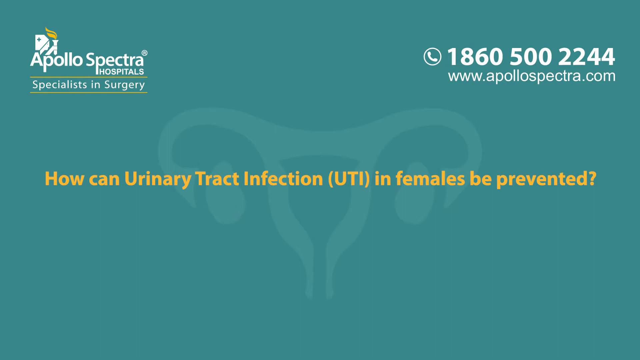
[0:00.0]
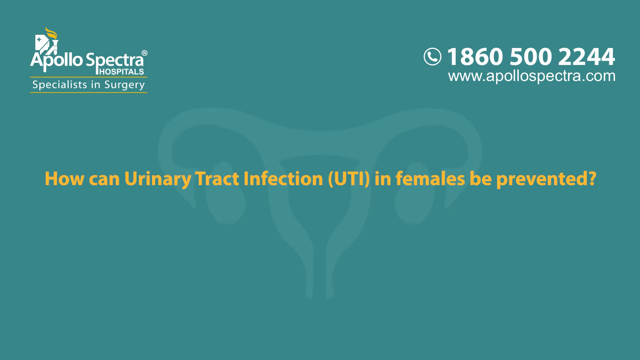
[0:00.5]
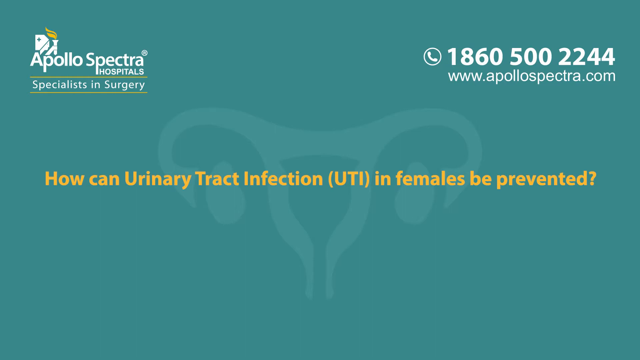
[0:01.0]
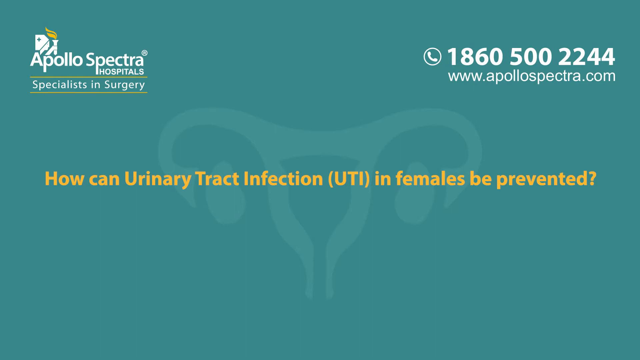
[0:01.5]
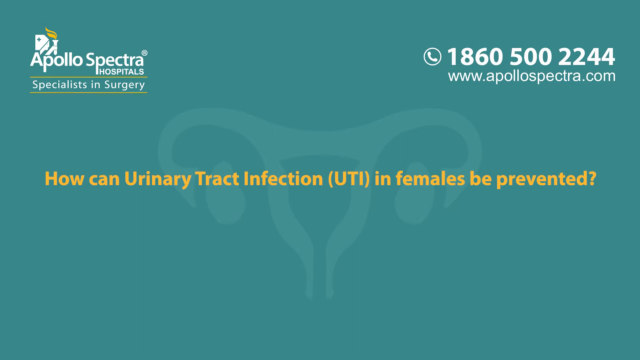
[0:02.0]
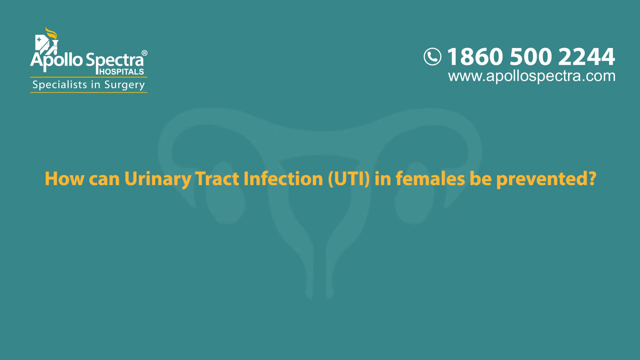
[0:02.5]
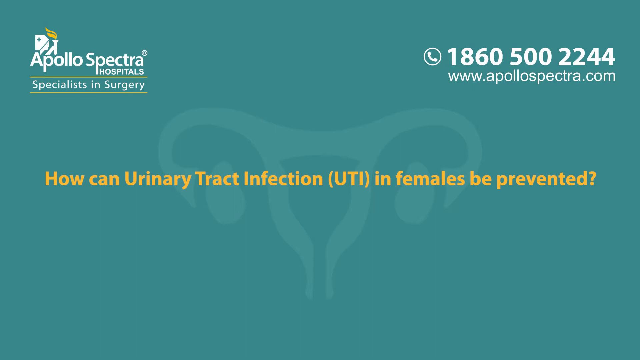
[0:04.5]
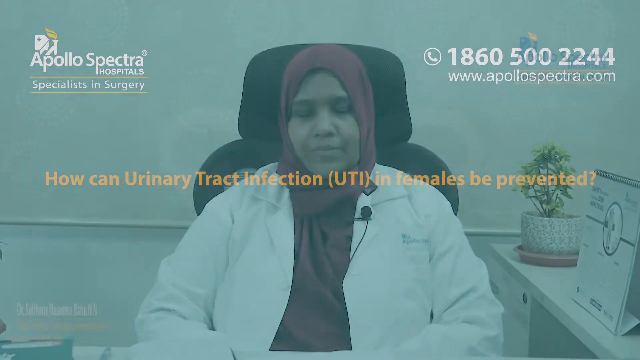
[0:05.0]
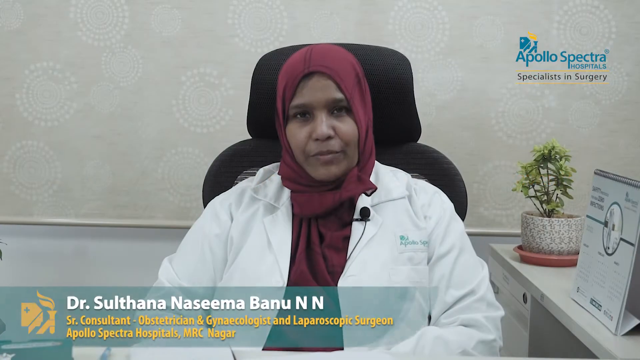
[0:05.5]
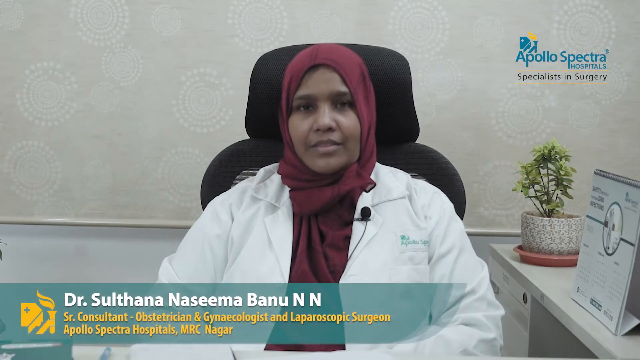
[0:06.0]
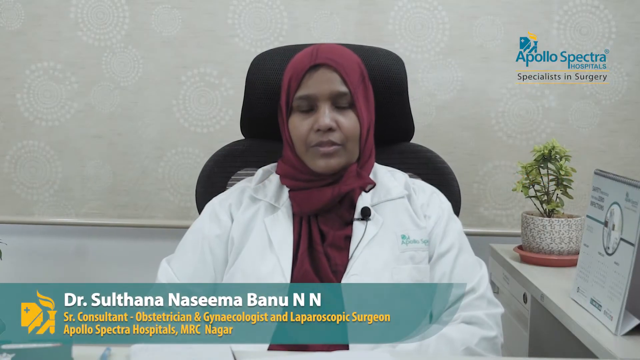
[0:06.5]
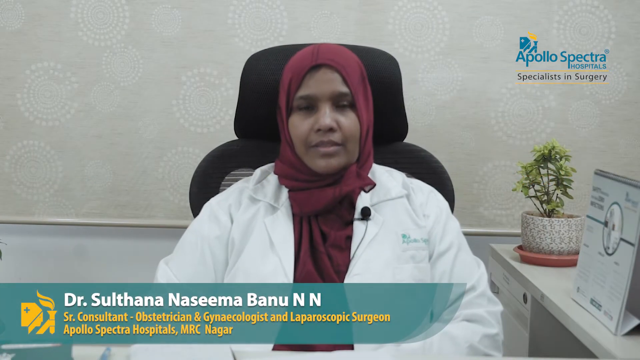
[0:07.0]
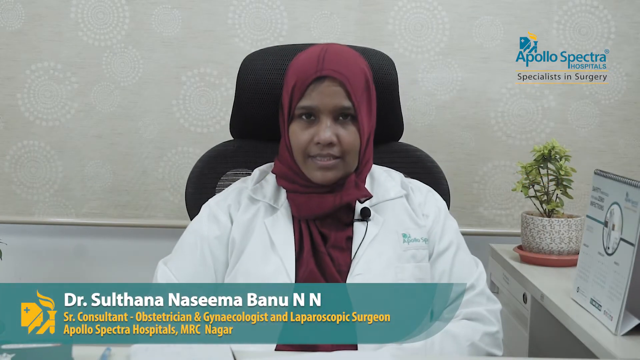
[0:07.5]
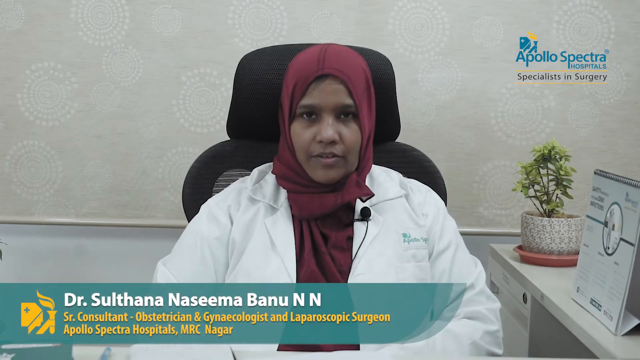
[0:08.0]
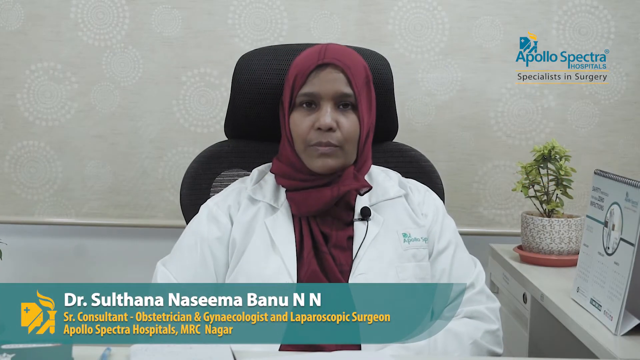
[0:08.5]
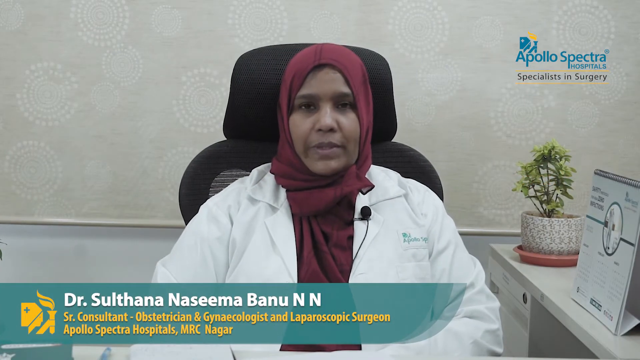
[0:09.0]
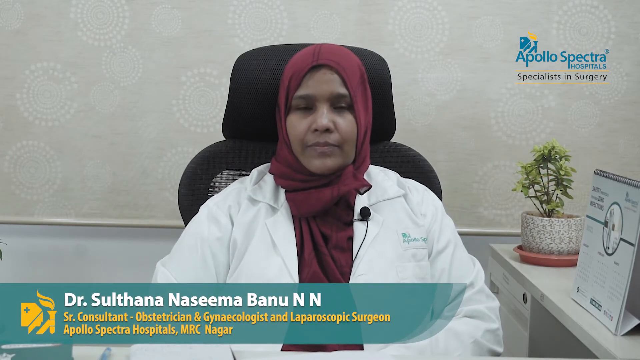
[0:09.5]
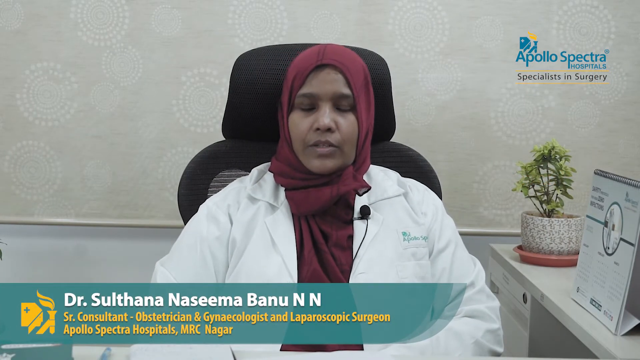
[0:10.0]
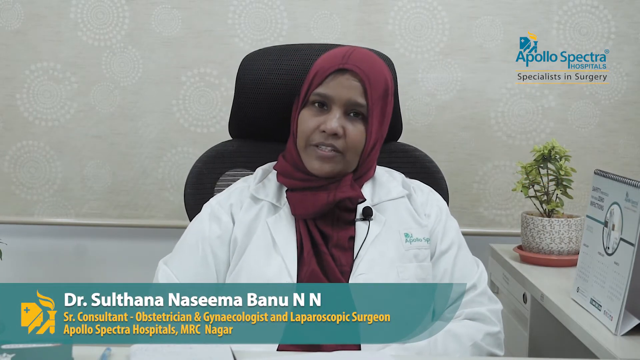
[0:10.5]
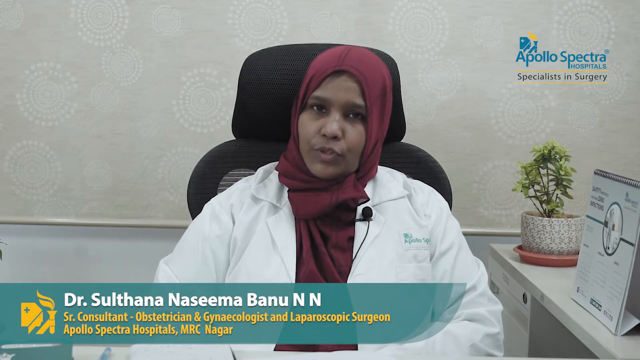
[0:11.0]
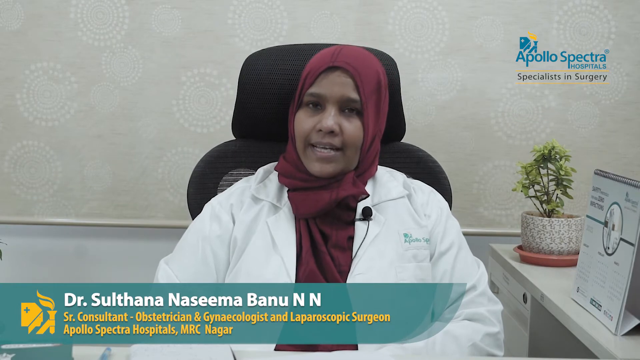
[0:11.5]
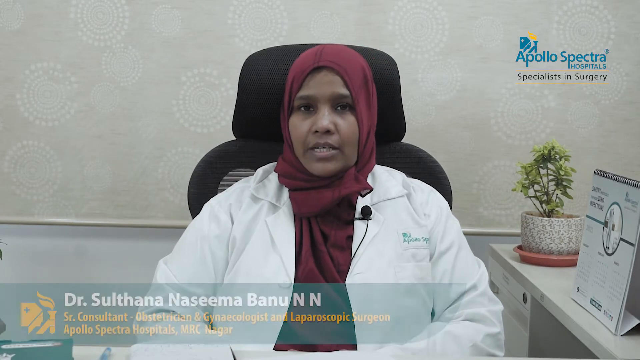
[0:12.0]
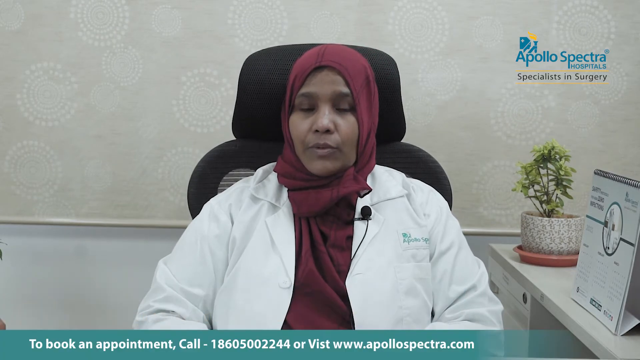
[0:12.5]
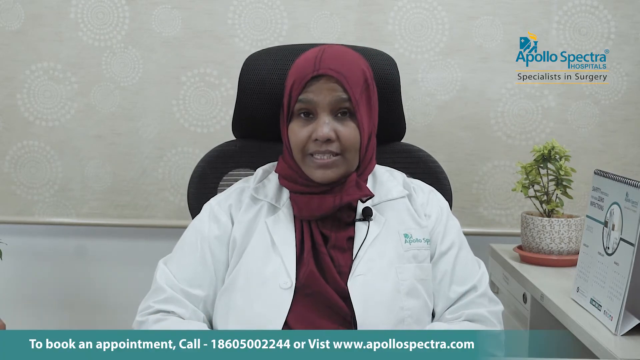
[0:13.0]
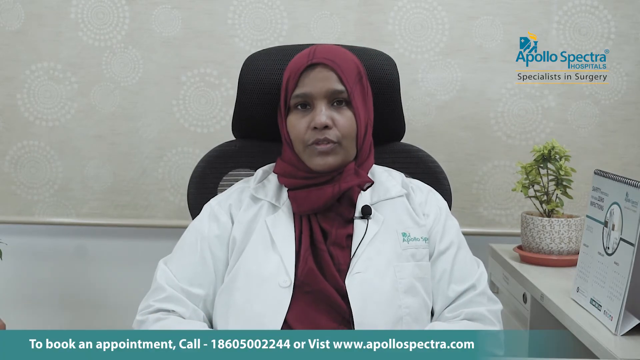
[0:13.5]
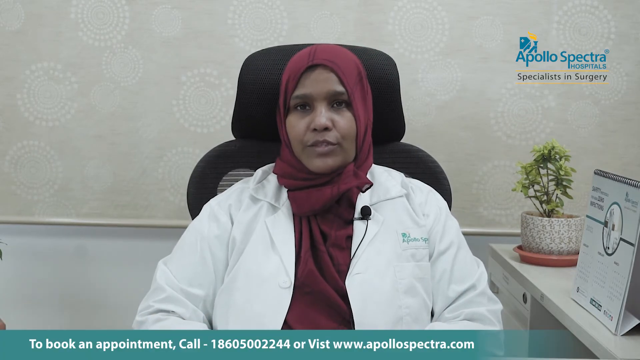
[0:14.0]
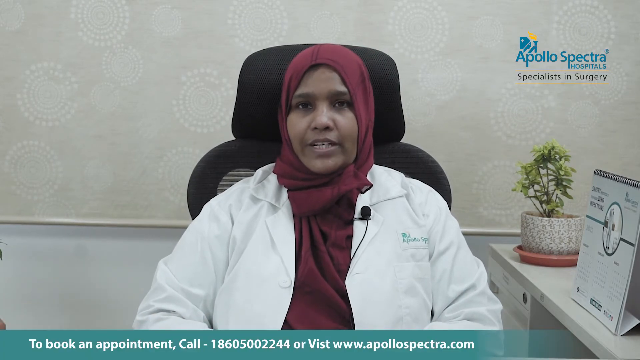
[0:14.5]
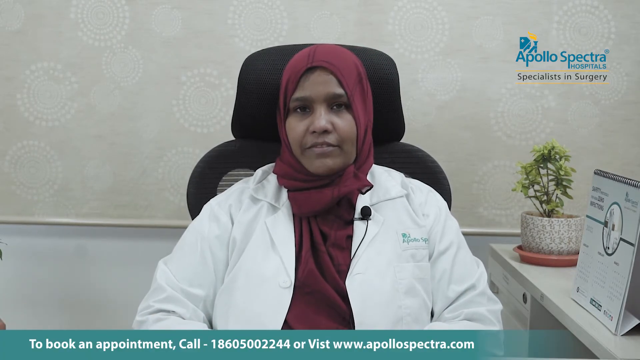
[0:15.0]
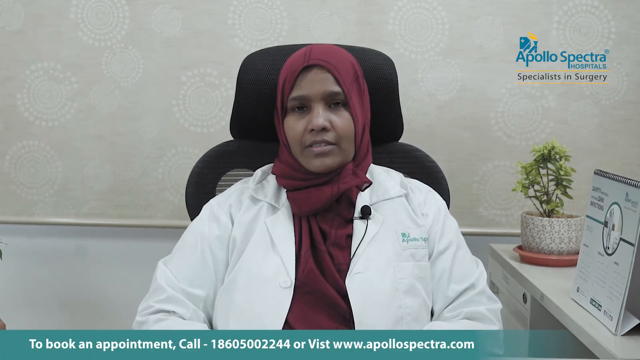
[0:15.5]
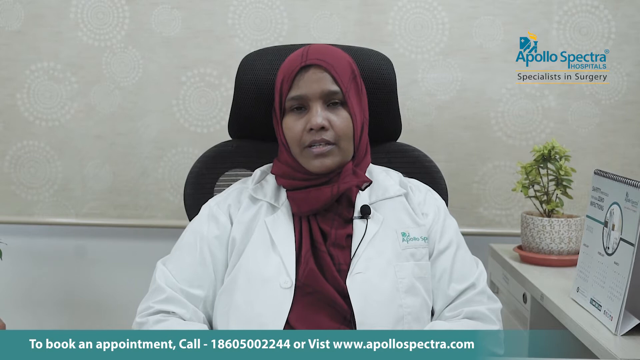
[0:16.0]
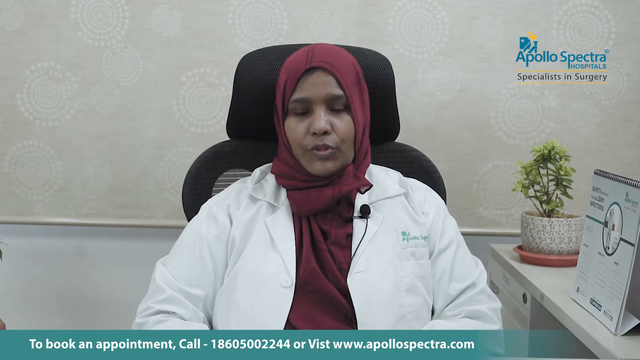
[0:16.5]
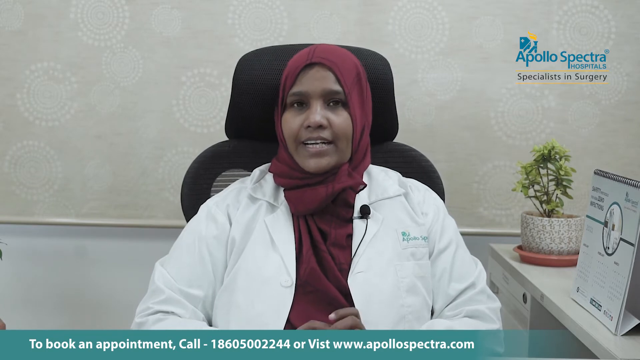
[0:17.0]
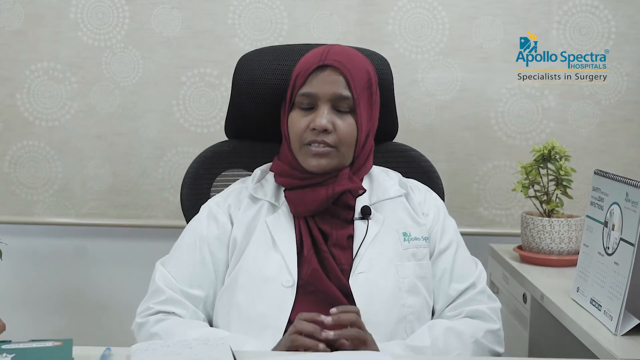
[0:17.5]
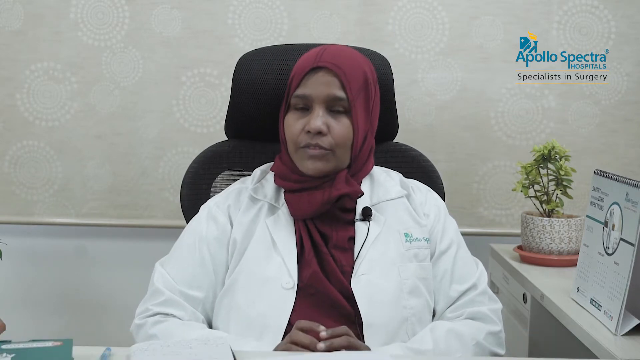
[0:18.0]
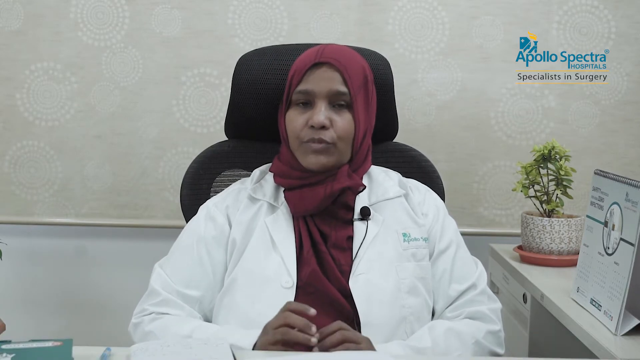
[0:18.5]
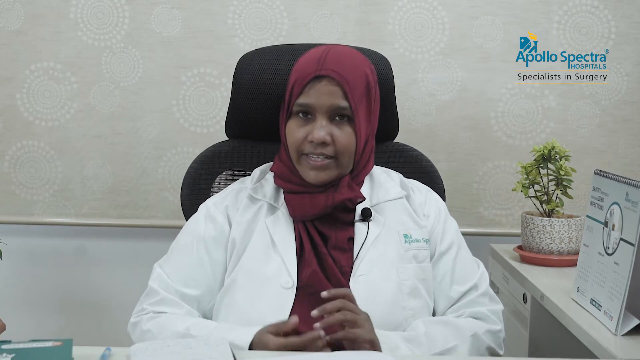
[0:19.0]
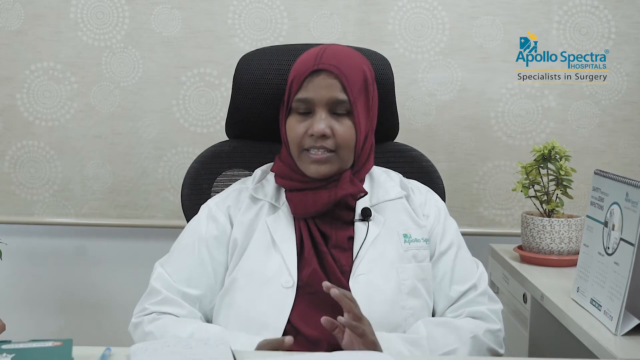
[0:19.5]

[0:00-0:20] The video concerns how to prevent urinary tract infections in females. A doctor, a senior consultant in obstetrics and gynecology whose name is hard to pronounce, is wearing something around her head, a white doctor's coat, and is sitting in a black chair. The doctor appears to be Indian or from India. A phone number and a website for the doctor's hospital, Apollo Spectra Hospitals, are shown, with the website given as www.apollospectra.com. The phone number is not a United States number.